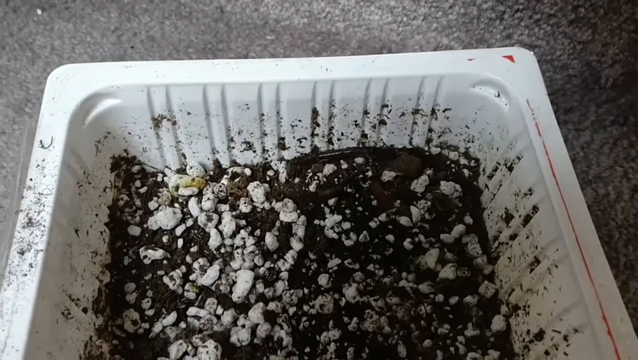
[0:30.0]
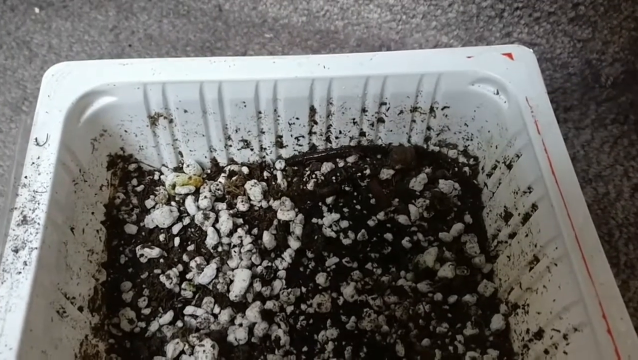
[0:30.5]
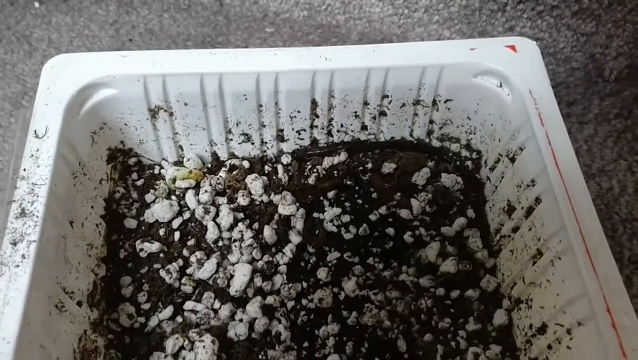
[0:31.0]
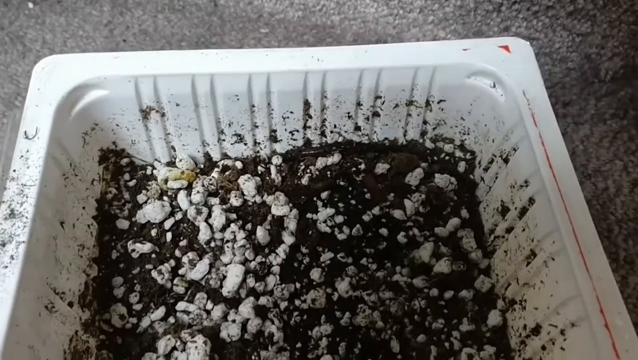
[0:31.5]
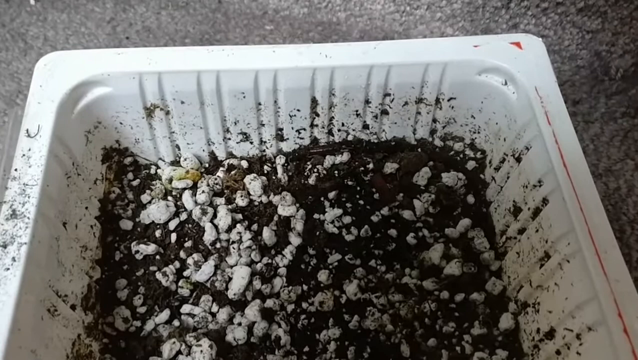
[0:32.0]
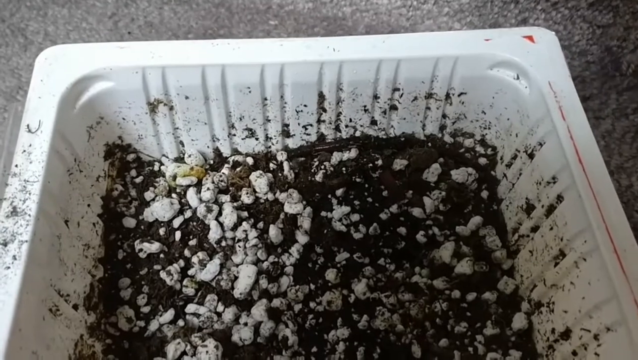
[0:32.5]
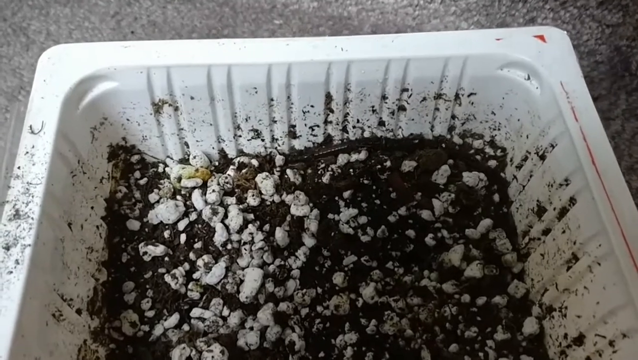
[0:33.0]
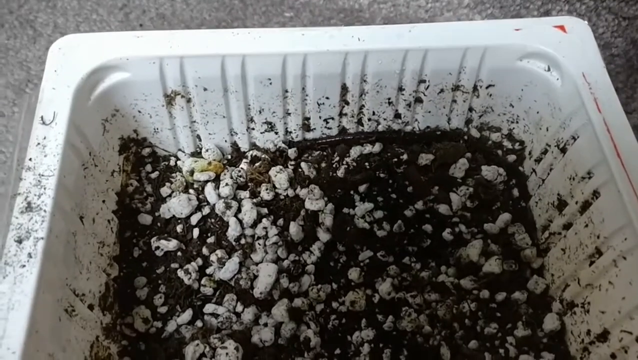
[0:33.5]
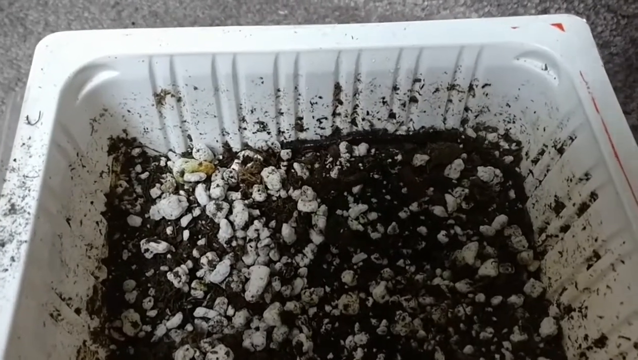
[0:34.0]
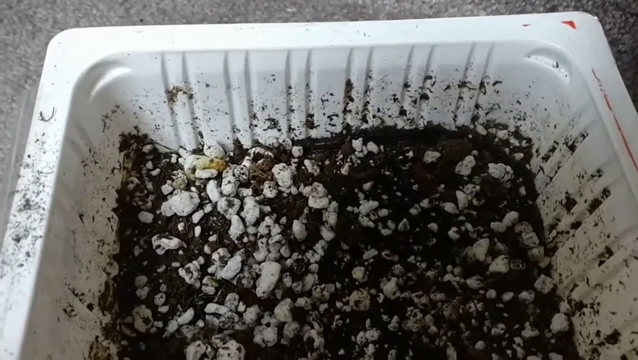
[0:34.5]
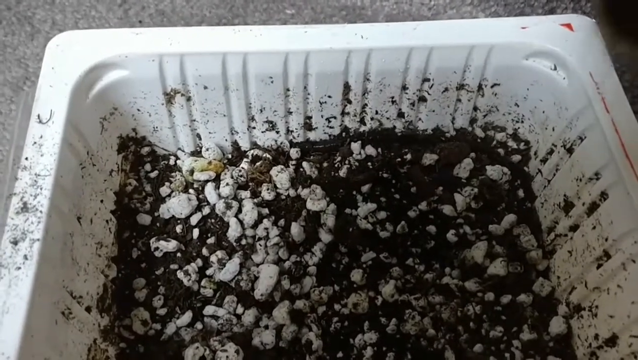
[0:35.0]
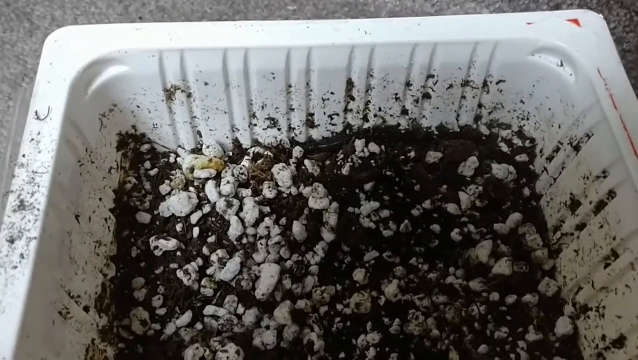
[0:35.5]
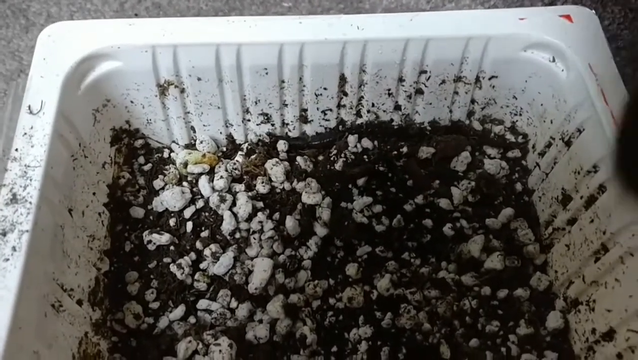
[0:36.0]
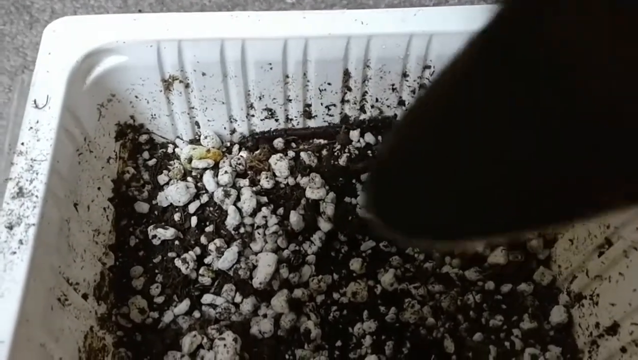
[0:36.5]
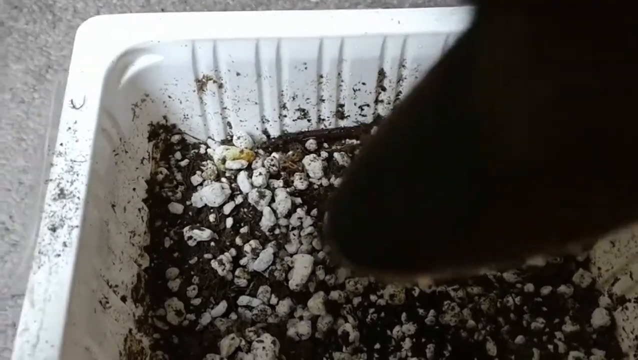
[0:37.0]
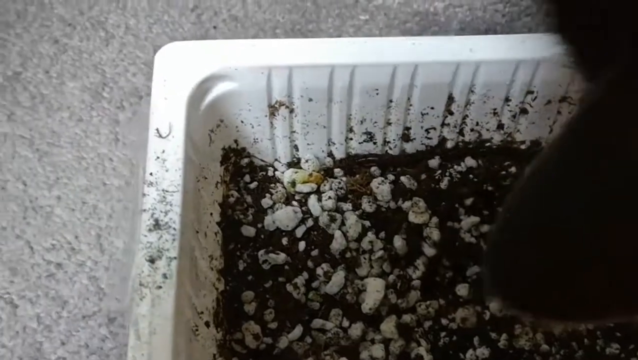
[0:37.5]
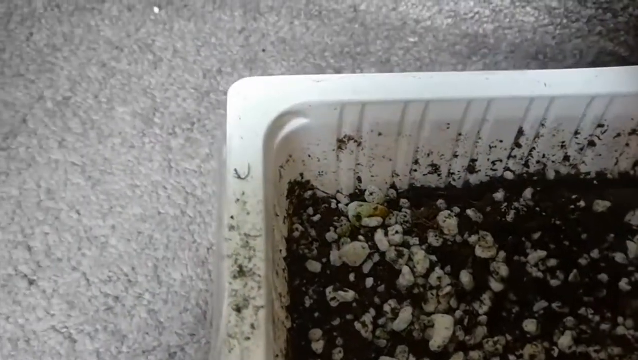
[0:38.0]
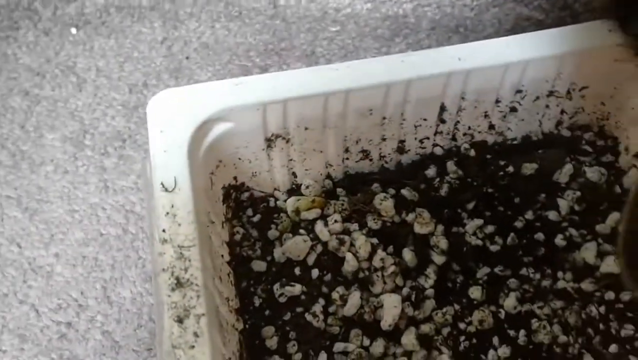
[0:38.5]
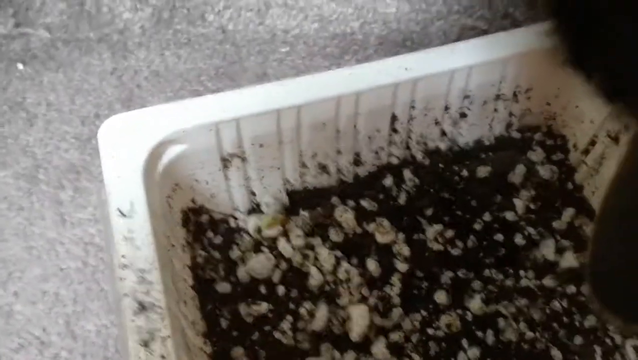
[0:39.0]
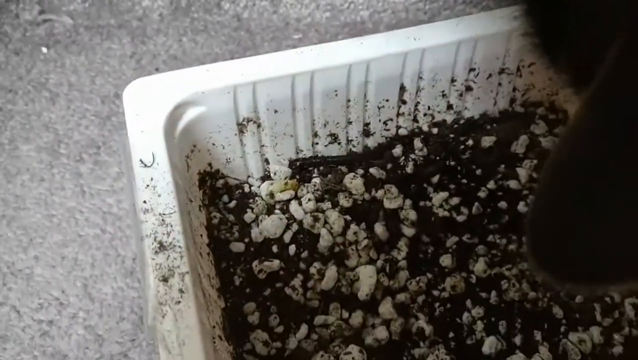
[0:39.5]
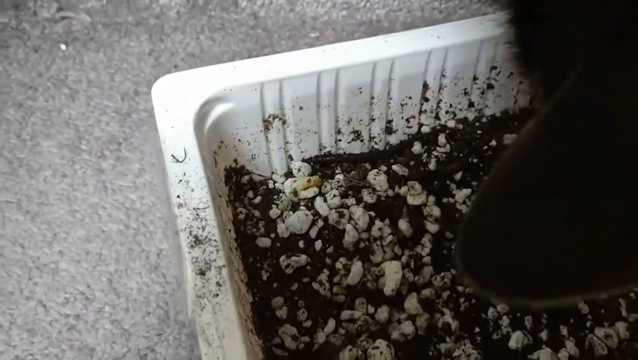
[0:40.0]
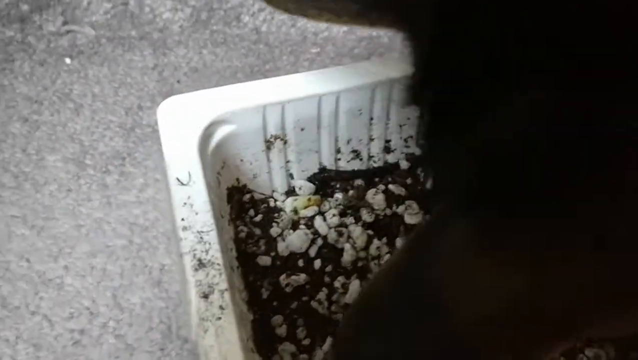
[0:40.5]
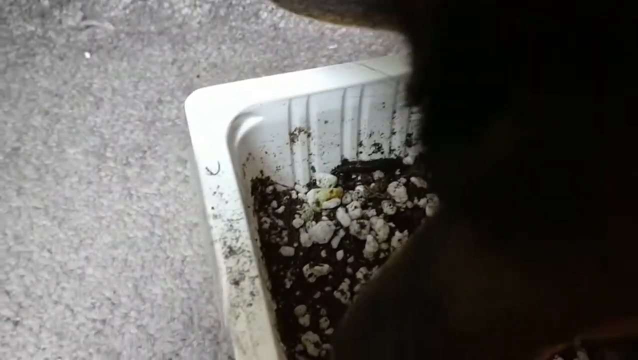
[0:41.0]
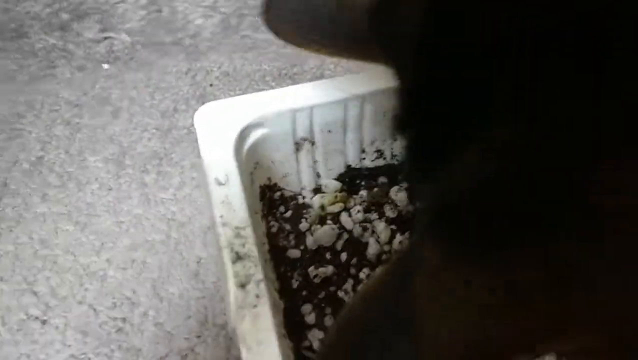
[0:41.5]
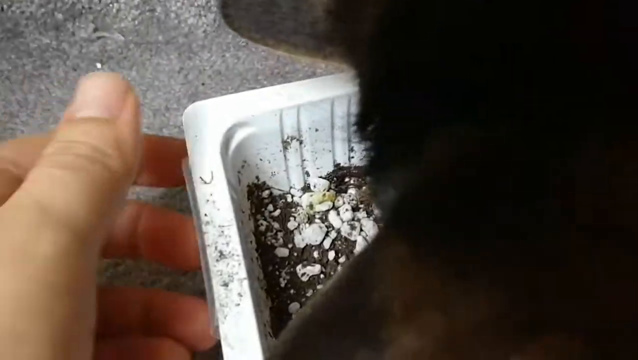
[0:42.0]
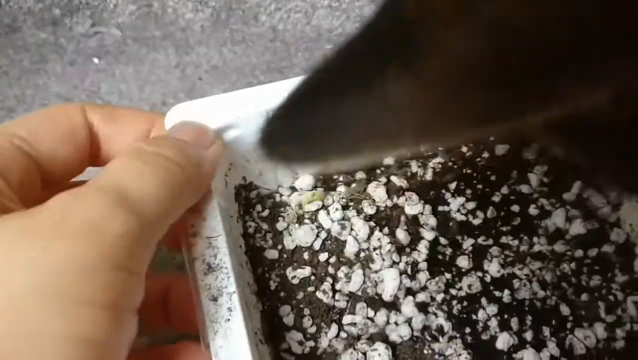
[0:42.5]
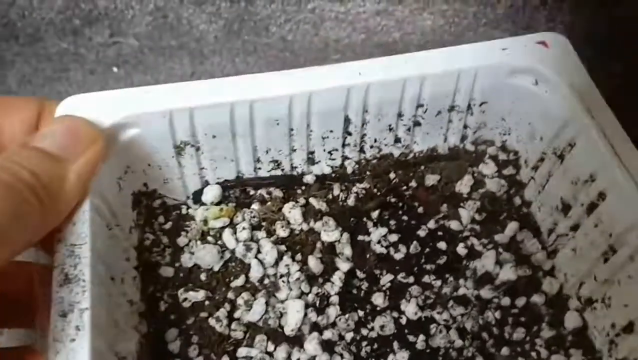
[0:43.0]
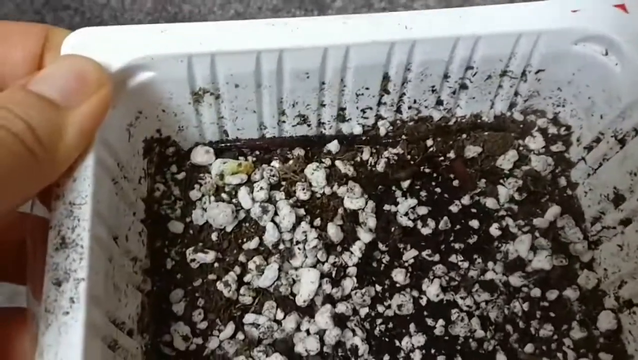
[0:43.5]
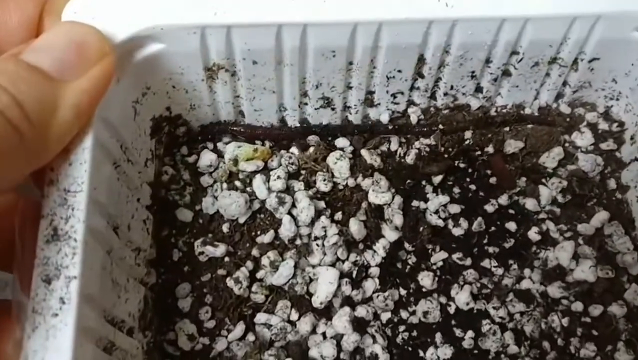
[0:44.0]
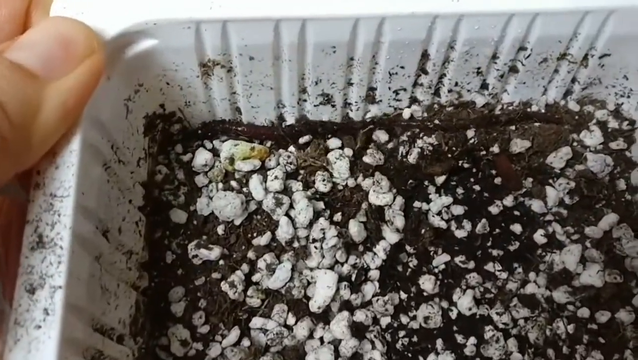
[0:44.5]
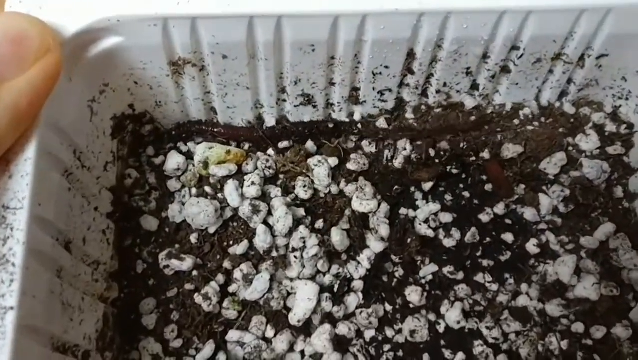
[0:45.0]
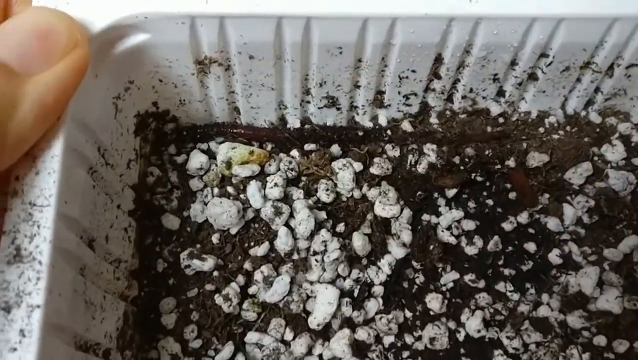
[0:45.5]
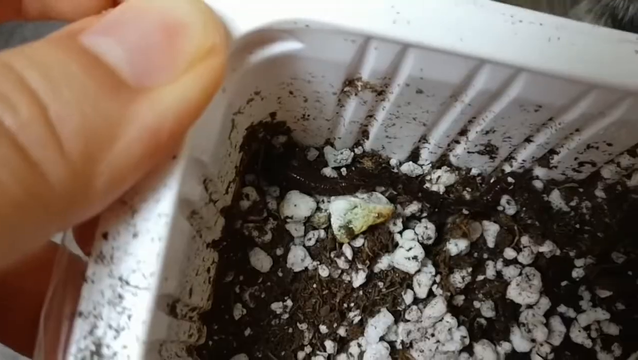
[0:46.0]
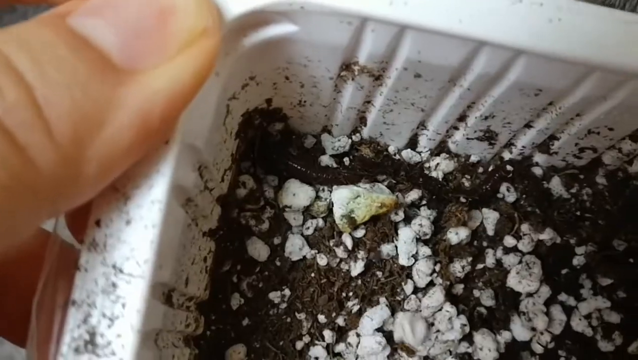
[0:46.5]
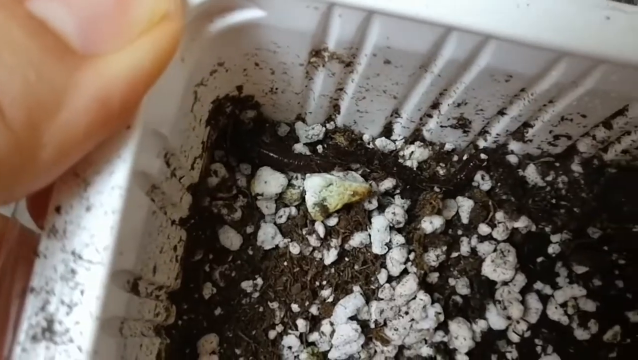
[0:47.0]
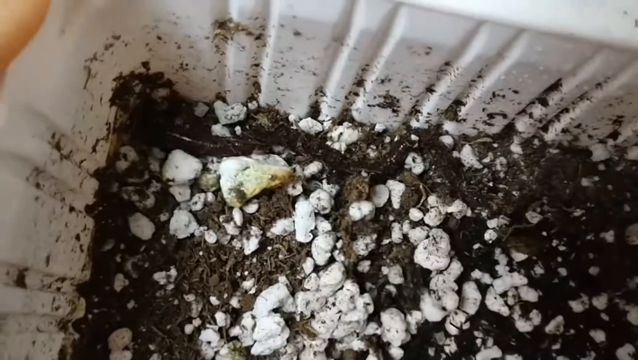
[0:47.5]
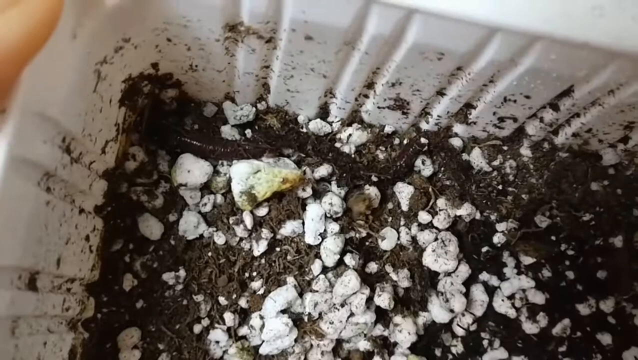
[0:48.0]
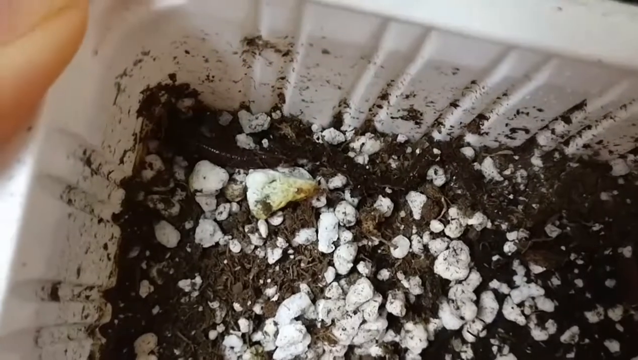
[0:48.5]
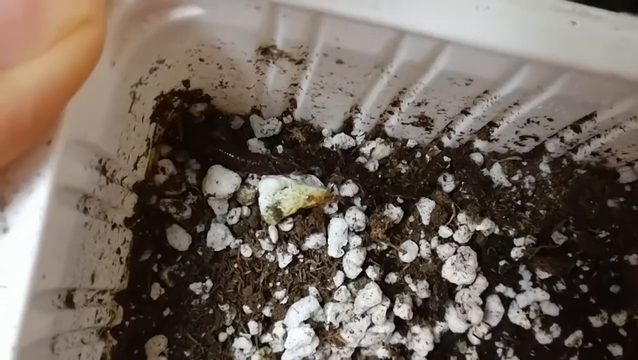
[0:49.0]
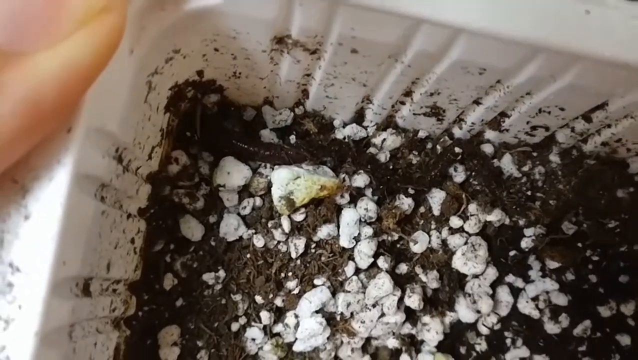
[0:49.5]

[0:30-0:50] A square white container holds black dirt with white rock-like structures in it. In the upper right corner is what appears to be a worm: long, black, skinny and silky-looking. The worm crawls from the upper right corner down the side of the bin. A hand comes into the image and the camera moves to the left as the worm continues crawling down the top part of the bin. A cat comes into the frame, its head blocking the camera; it seems to have seen the worm. The person picks up the bin and brings it closer to the camera, where the worm is squirming and digging in the corner.